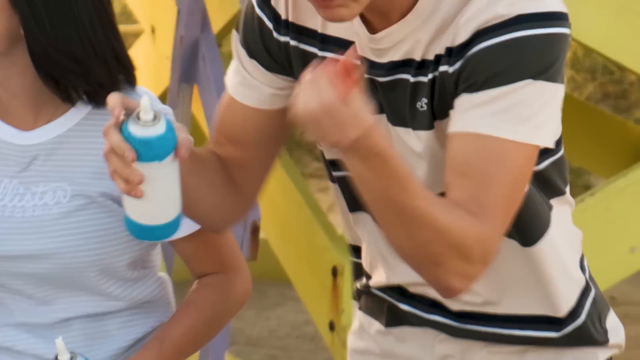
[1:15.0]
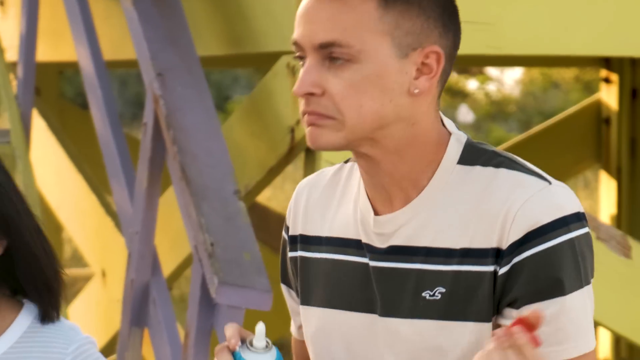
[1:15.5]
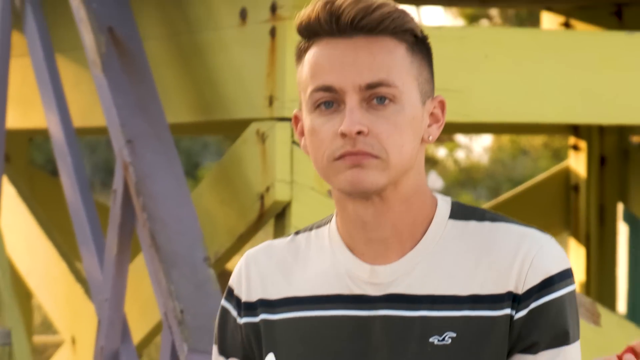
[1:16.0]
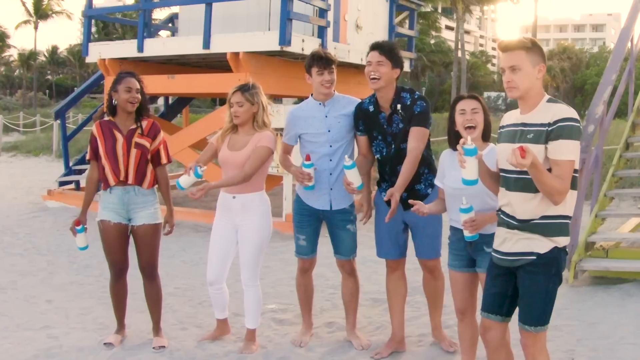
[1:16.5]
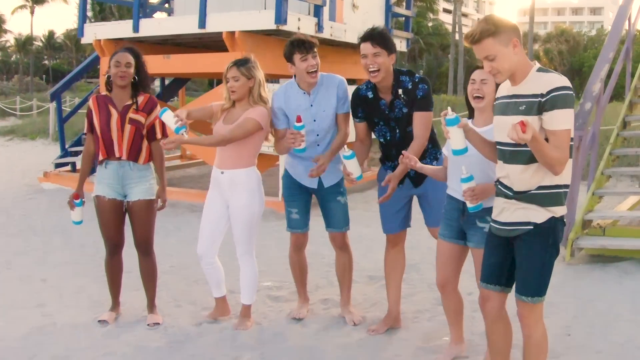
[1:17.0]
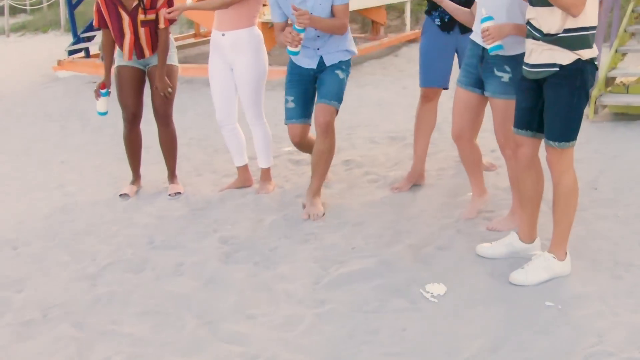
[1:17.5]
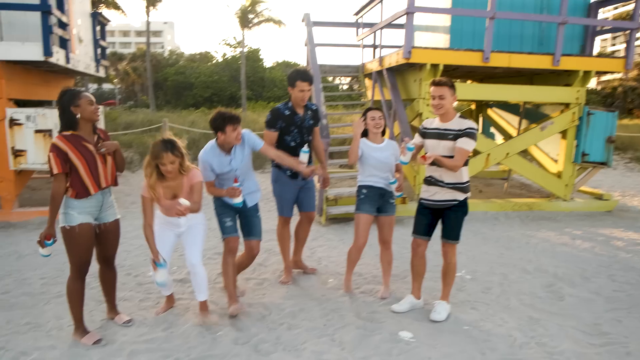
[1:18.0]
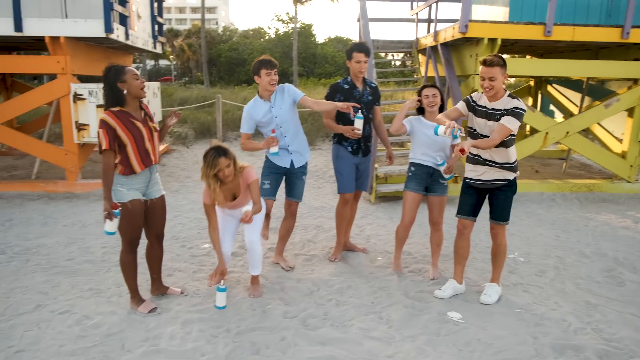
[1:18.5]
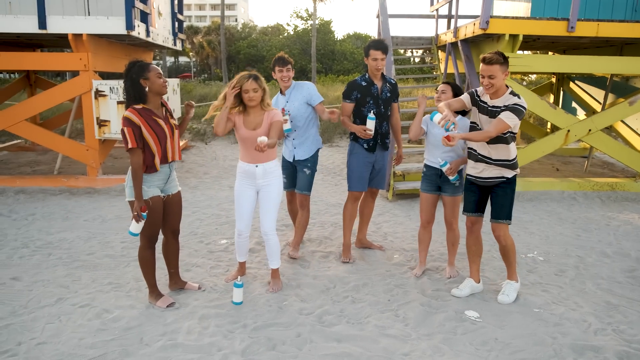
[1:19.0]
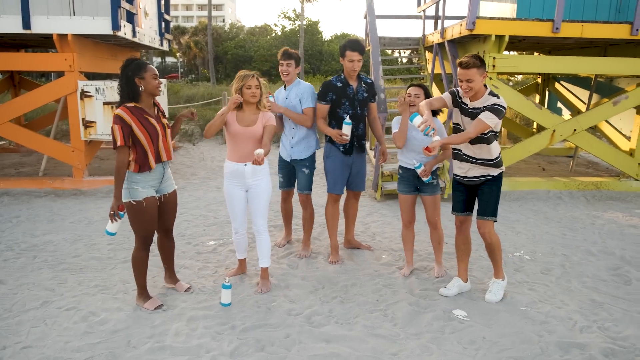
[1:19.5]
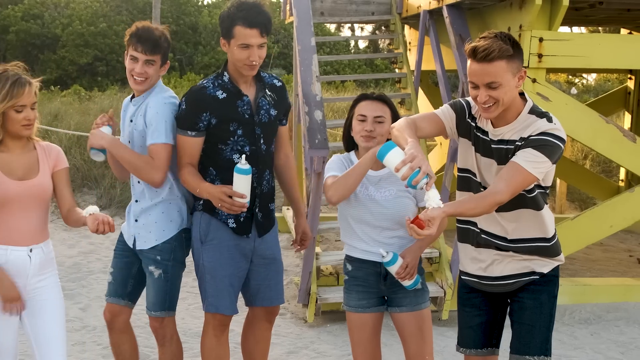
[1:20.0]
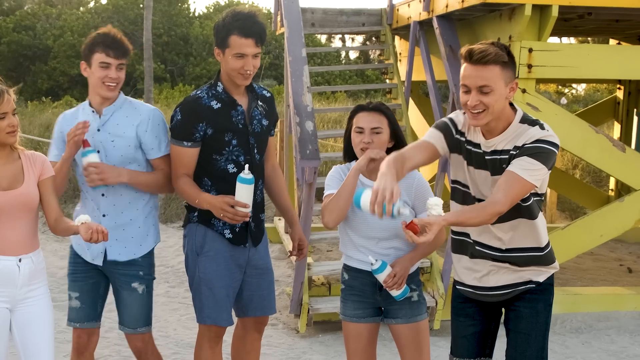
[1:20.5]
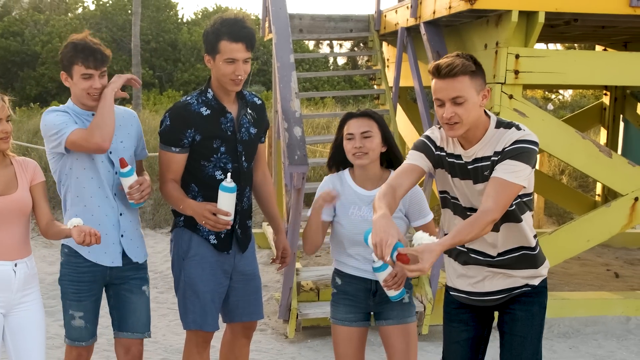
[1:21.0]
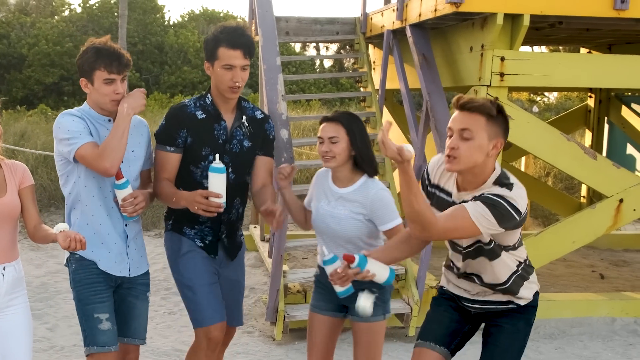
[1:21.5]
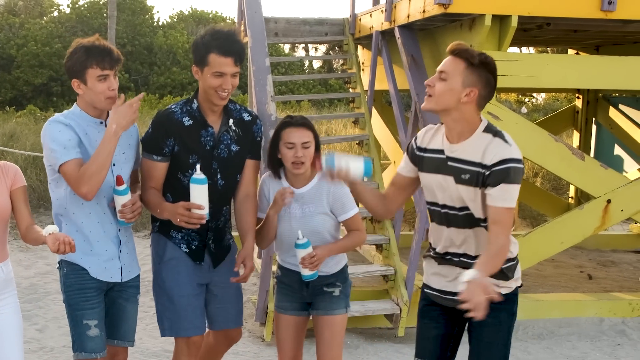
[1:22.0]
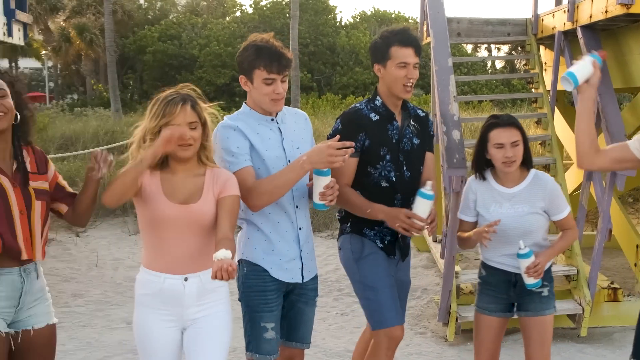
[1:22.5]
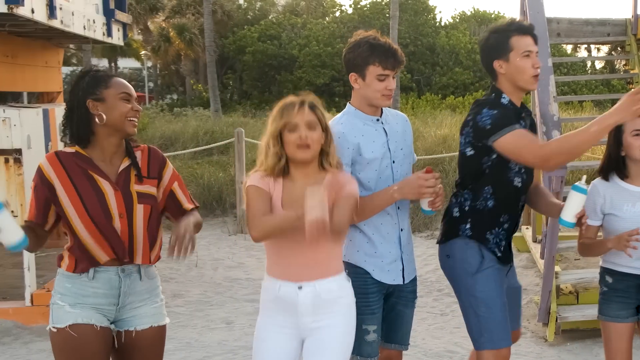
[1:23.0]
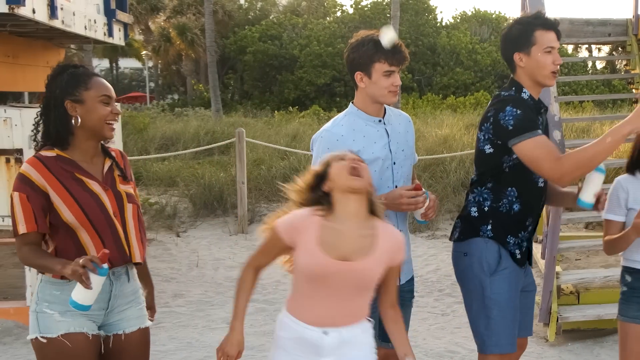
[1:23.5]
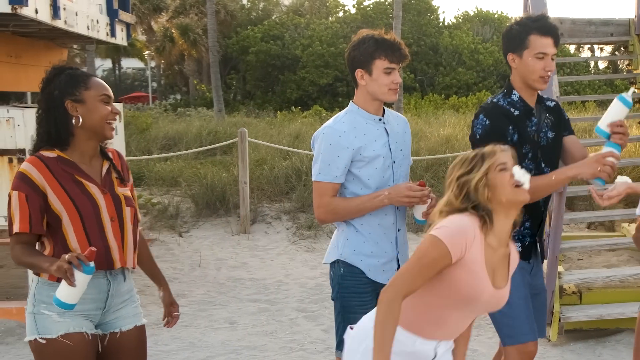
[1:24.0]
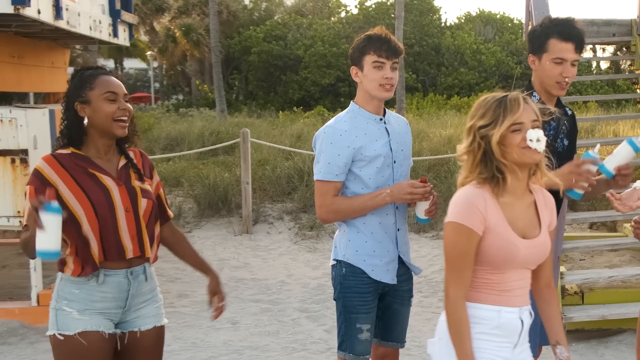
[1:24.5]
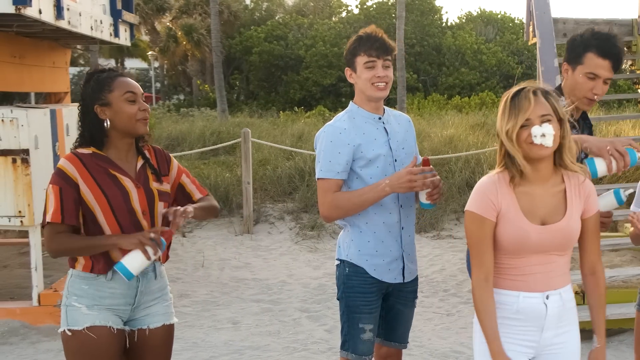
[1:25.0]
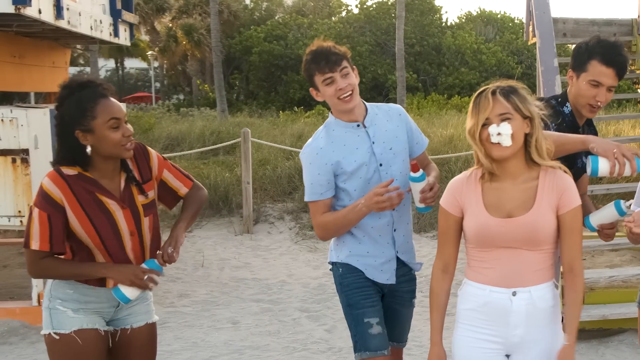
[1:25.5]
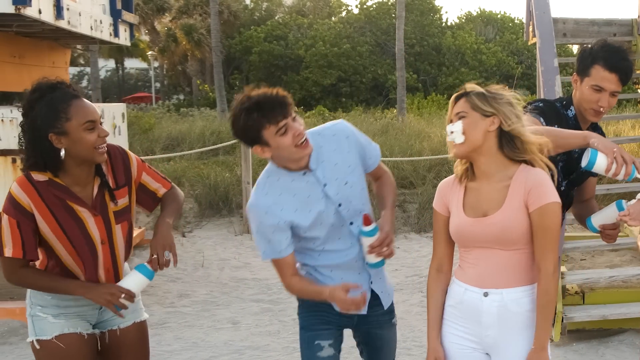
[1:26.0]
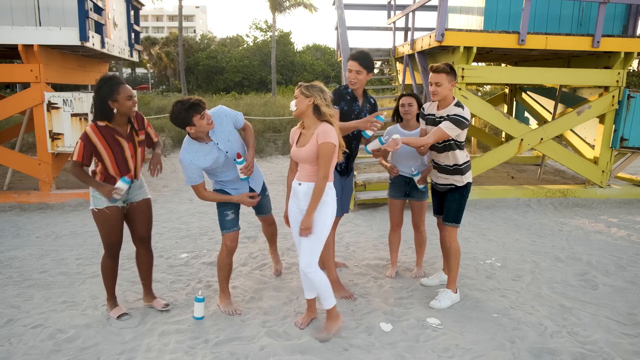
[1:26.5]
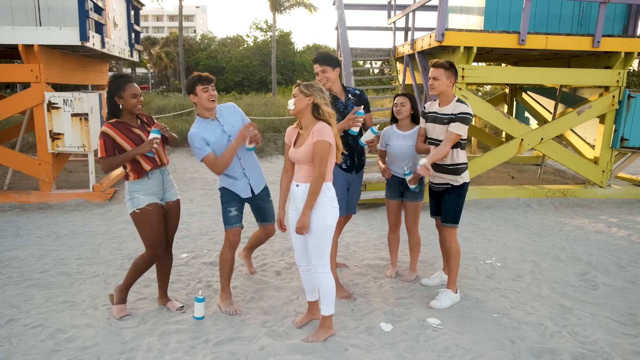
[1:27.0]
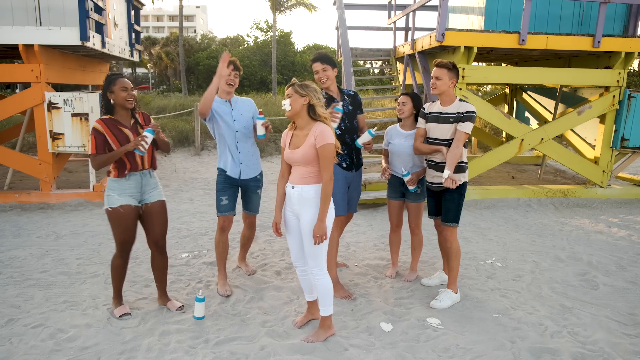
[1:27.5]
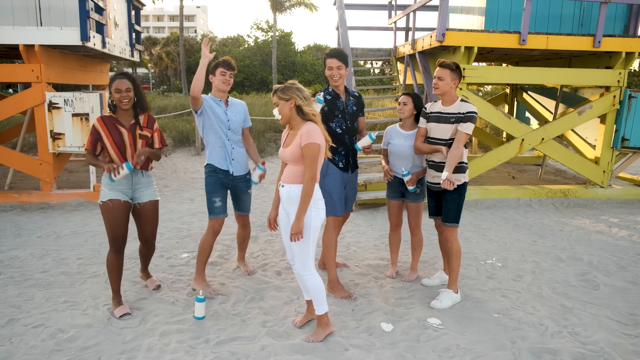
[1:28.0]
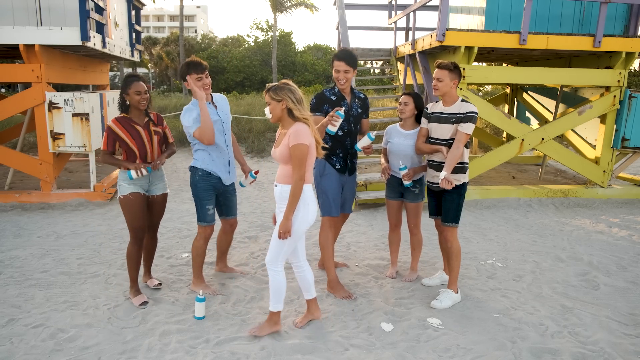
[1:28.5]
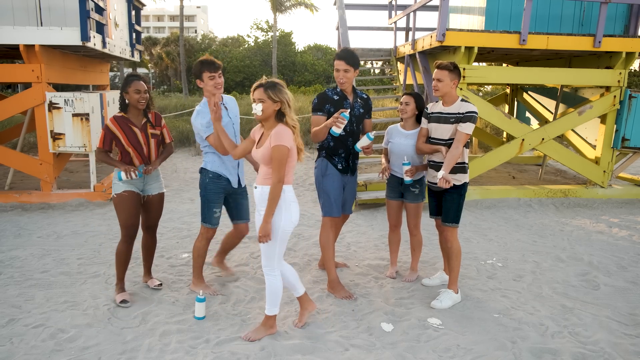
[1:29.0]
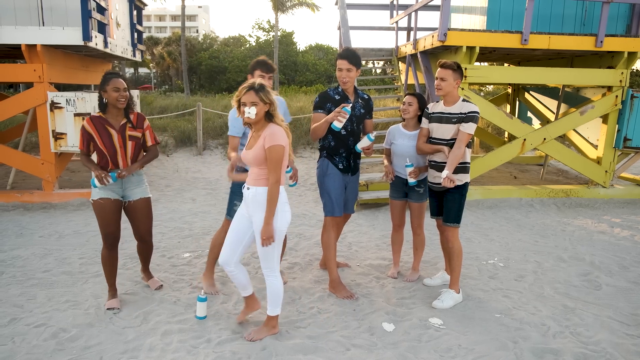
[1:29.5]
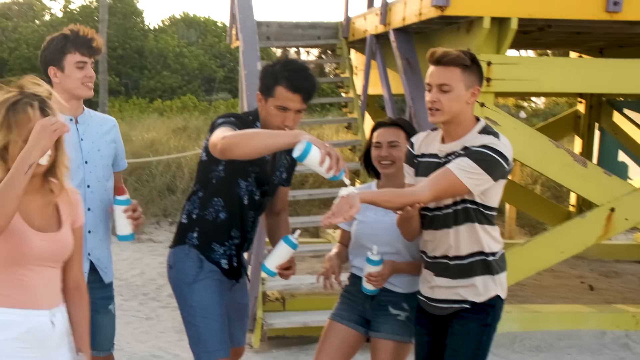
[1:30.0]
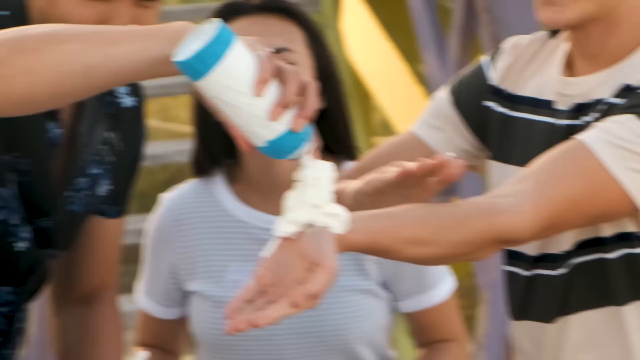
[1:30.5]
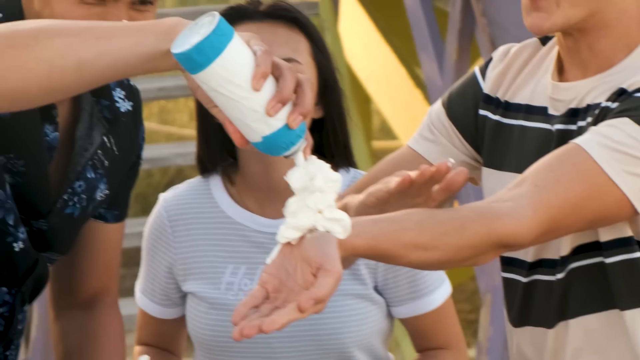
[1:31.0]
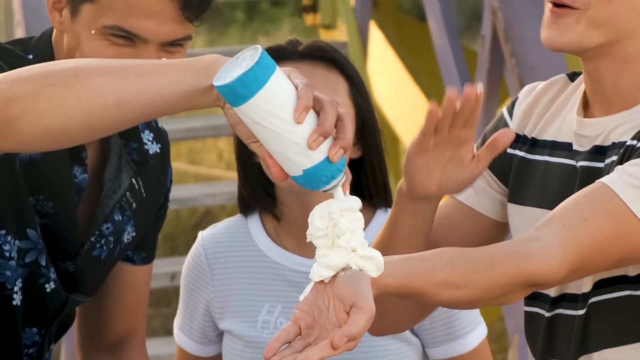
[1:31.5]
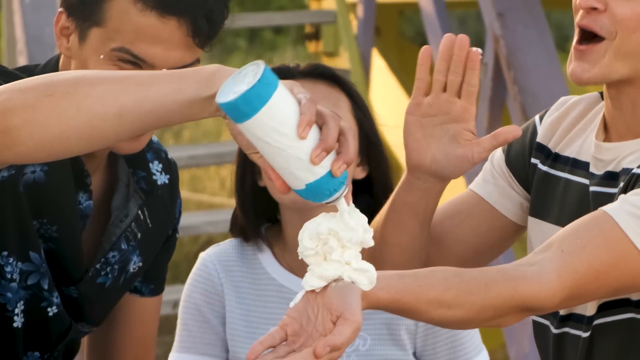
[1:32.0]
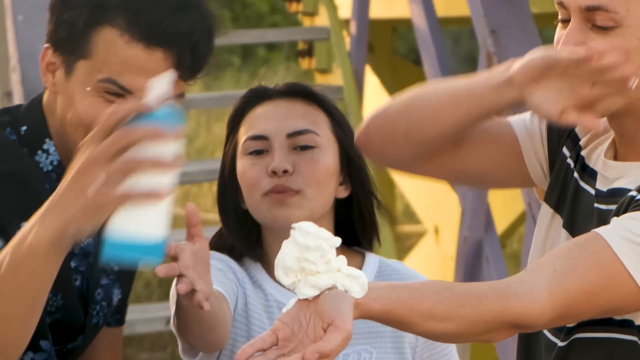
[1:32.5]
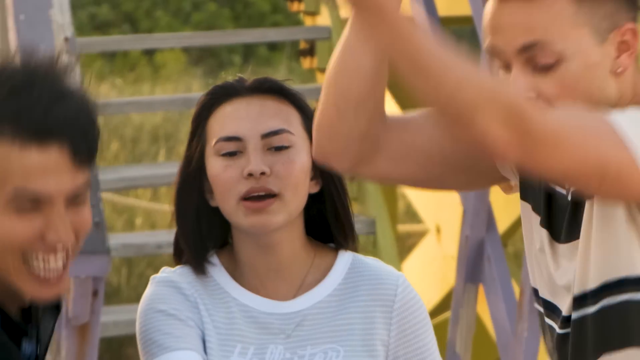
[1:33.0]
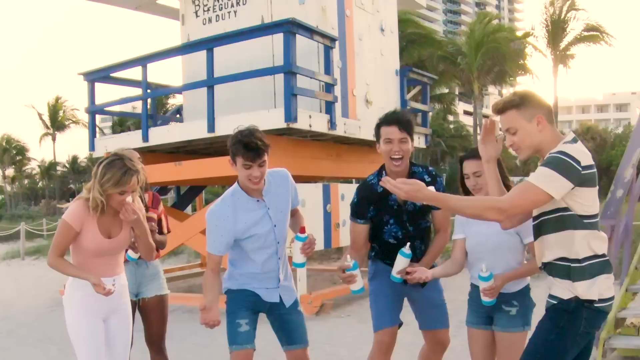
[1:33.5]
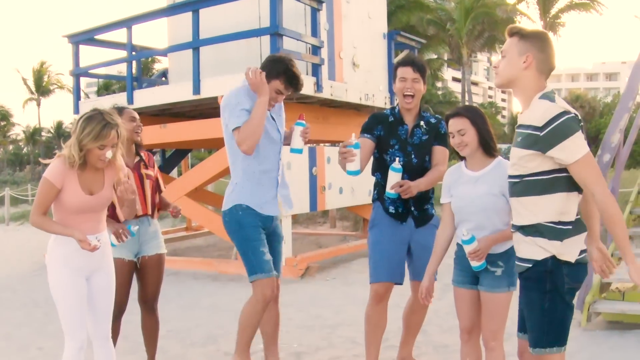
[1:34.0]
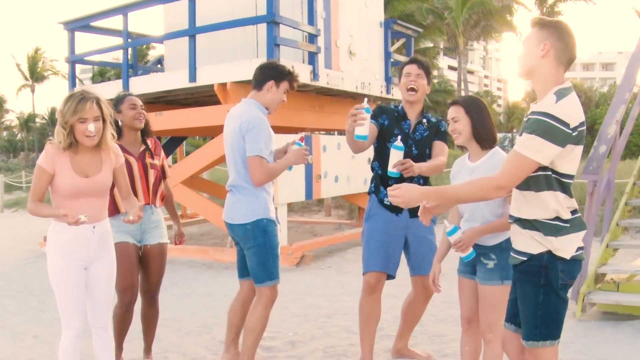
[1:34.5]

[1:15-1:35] Damon tries the challenge. He has put whipped cream on the inside of his wrist, but it immediately falls off into the sand, and he sort of grimaces as he looks down at the dollop in the sand. He puts another large amount of whipped cream on the inside of his wrist, plays with the nozzle of the can, and it falls into the sand again. Meanwhile Chachi has put whipped cream on the inside of her wrist; she raises her arm and smacks it so the whipped cream goes flying, and it lands not in her mouth but perfectly in the center of her face, framing her nose. All the participants laugh and she gives Hayes a high-five. Damon then tries again after Aaron puts an incredibly large amount of whipped cream on the inside of his arm, but as he raises his arm the whipped cream just falls into the sand again, and all the participants laugh.